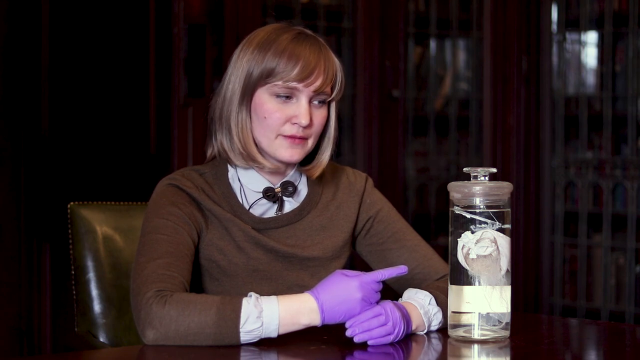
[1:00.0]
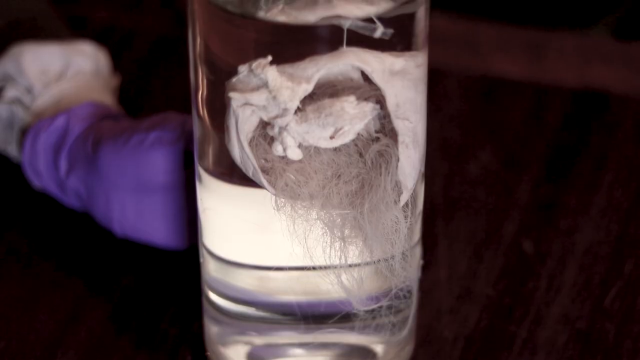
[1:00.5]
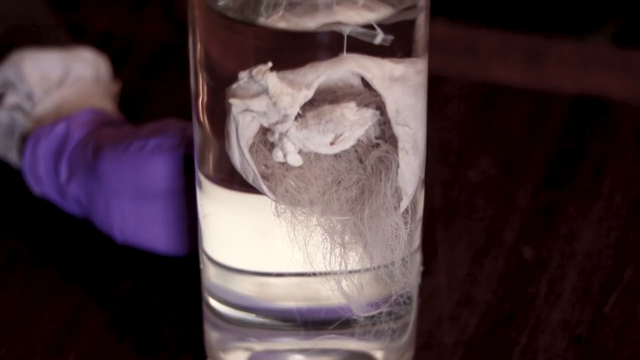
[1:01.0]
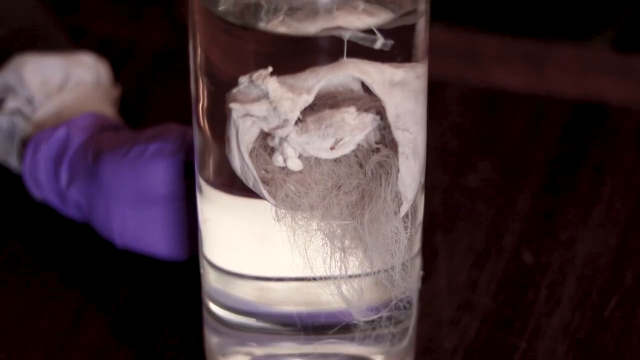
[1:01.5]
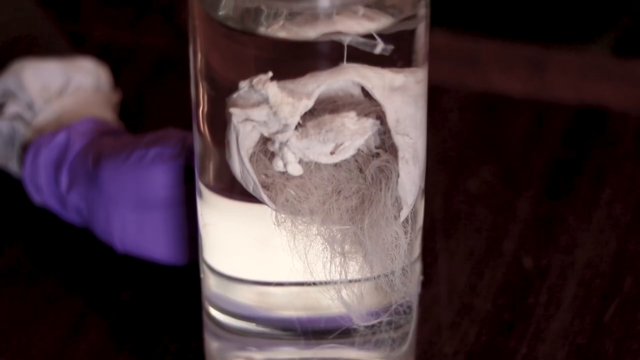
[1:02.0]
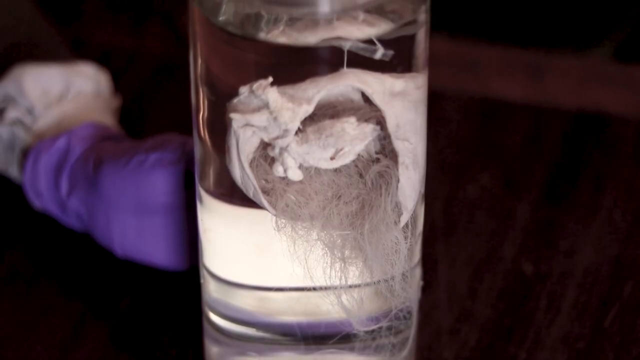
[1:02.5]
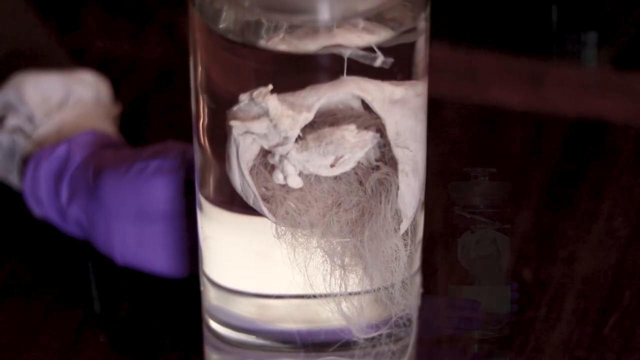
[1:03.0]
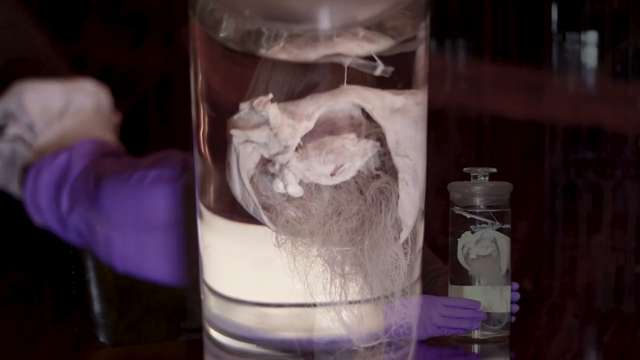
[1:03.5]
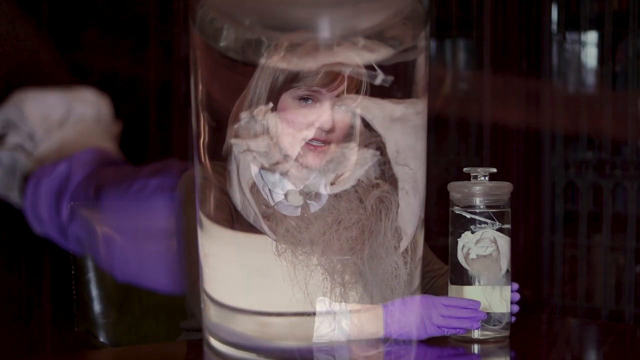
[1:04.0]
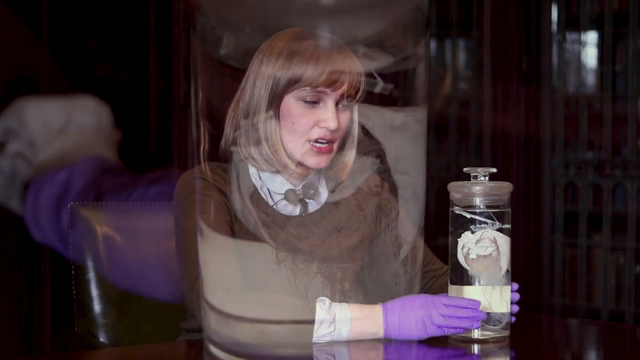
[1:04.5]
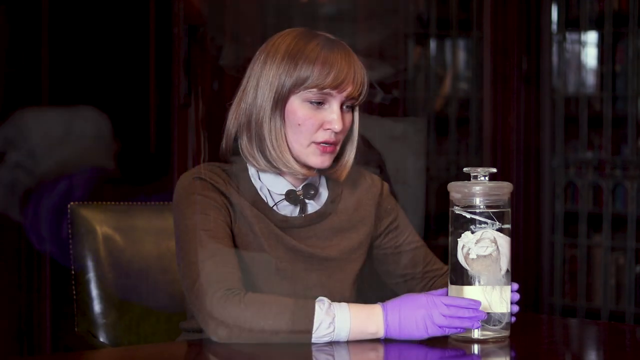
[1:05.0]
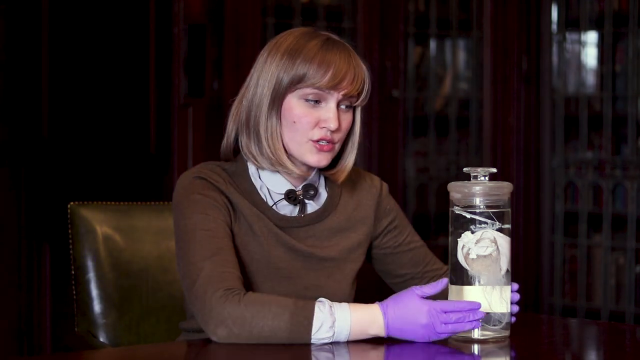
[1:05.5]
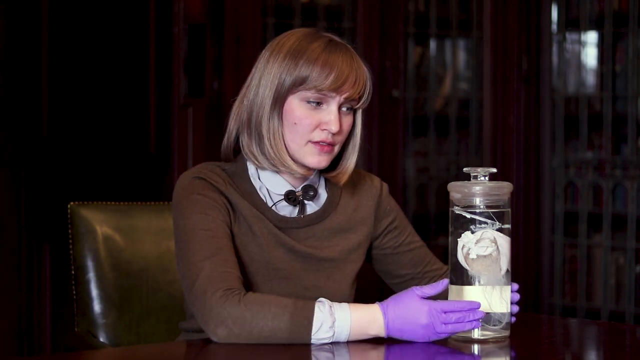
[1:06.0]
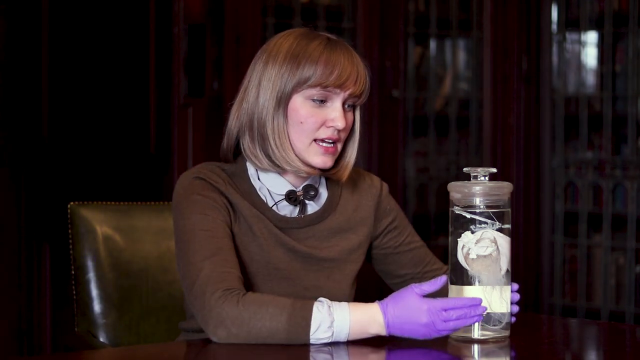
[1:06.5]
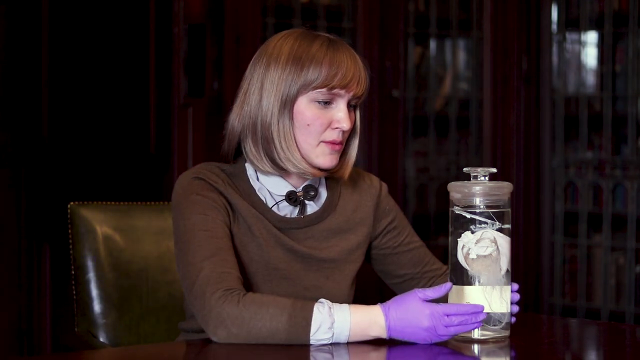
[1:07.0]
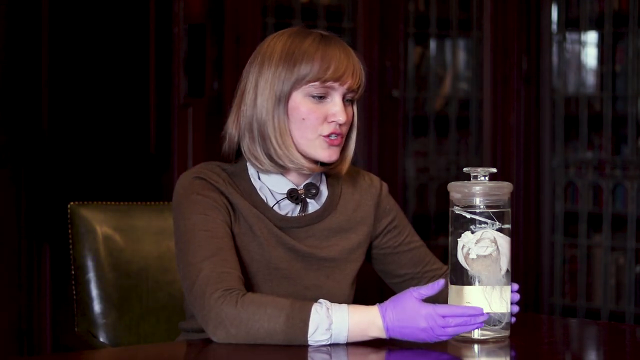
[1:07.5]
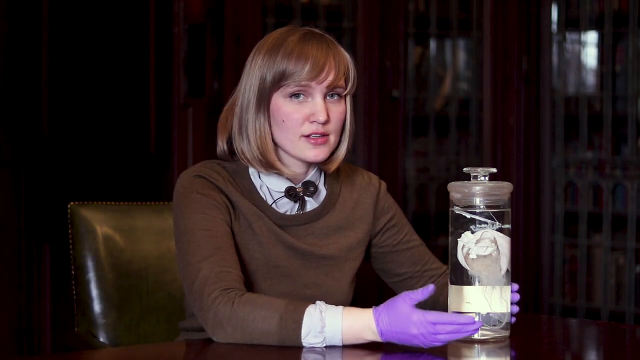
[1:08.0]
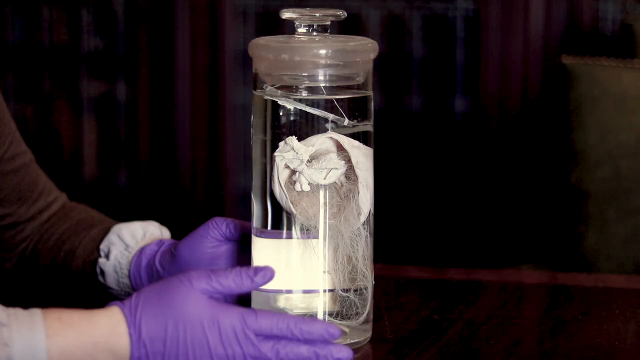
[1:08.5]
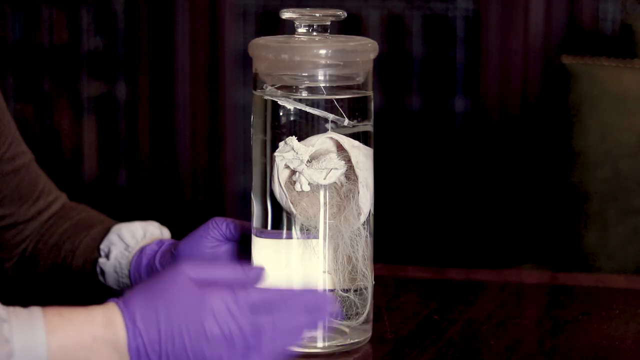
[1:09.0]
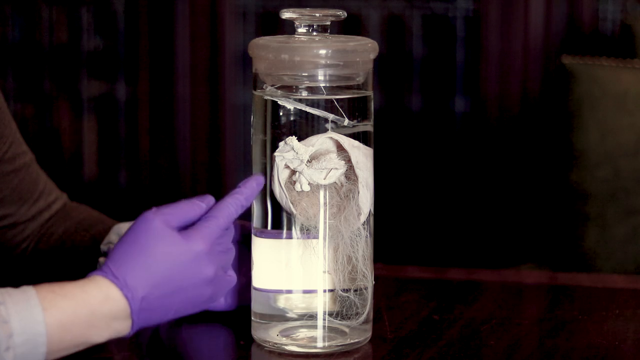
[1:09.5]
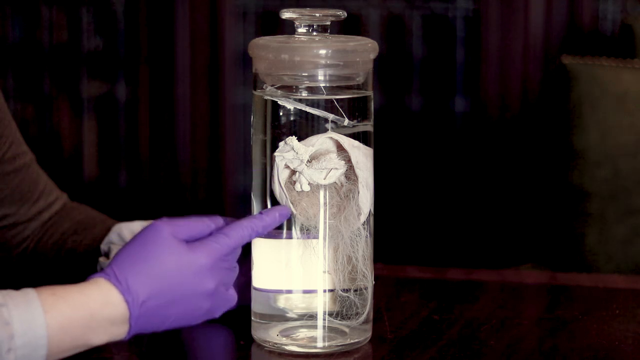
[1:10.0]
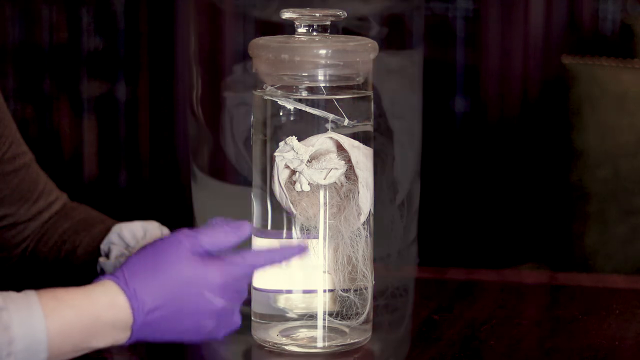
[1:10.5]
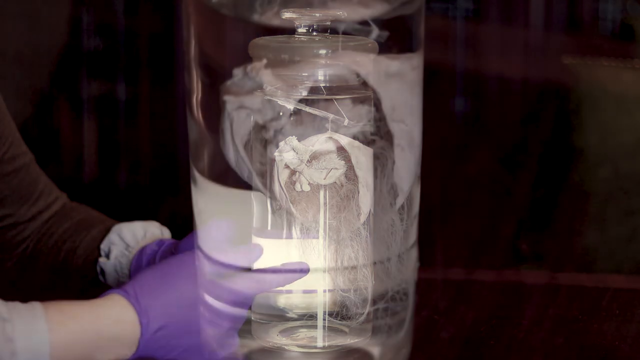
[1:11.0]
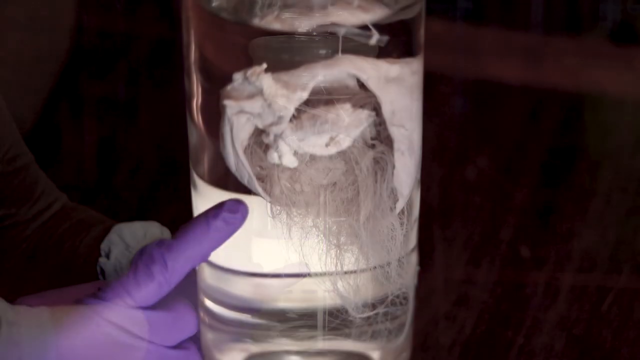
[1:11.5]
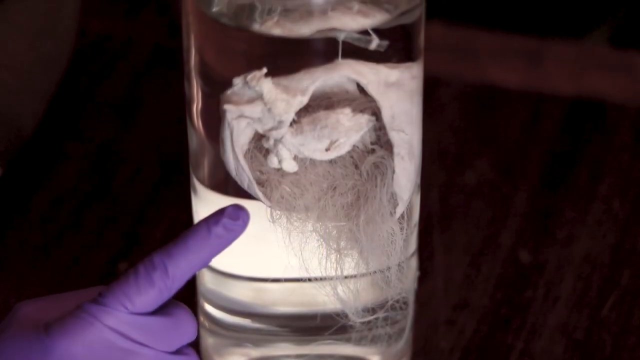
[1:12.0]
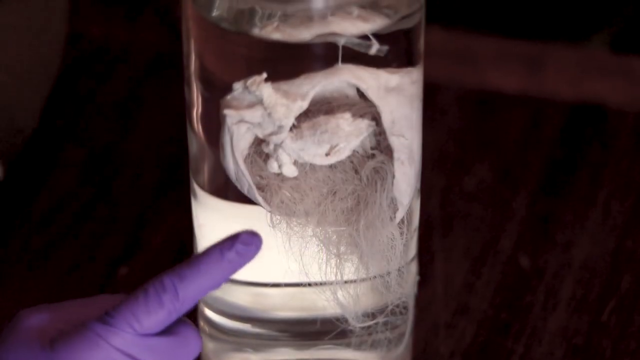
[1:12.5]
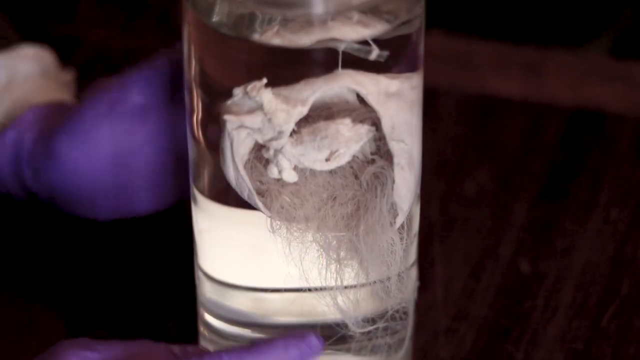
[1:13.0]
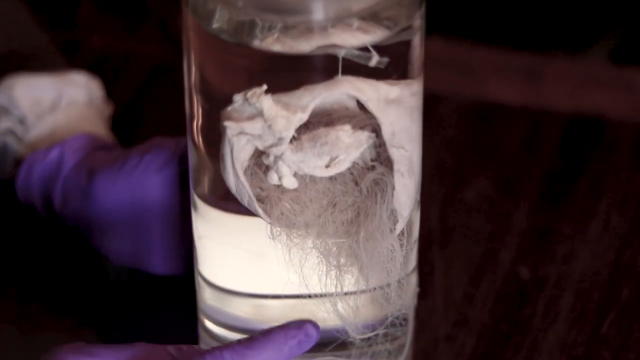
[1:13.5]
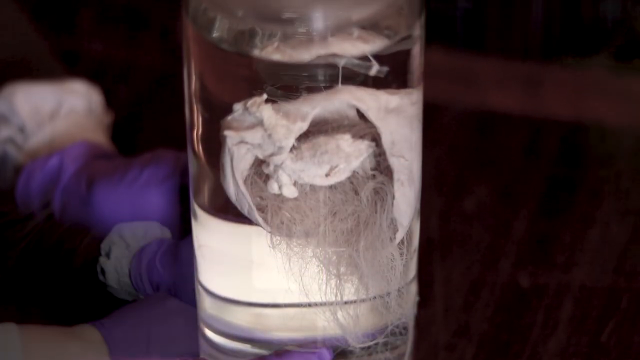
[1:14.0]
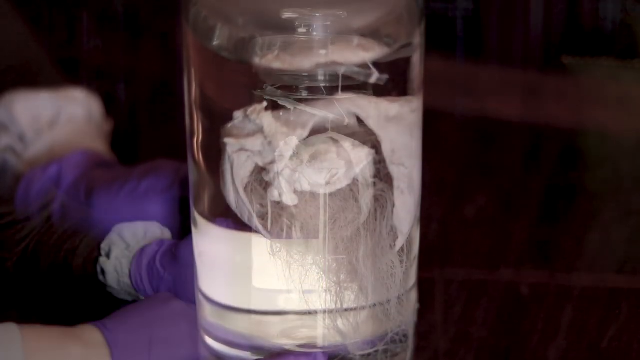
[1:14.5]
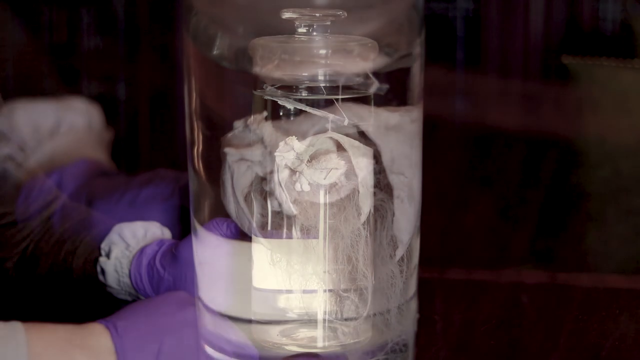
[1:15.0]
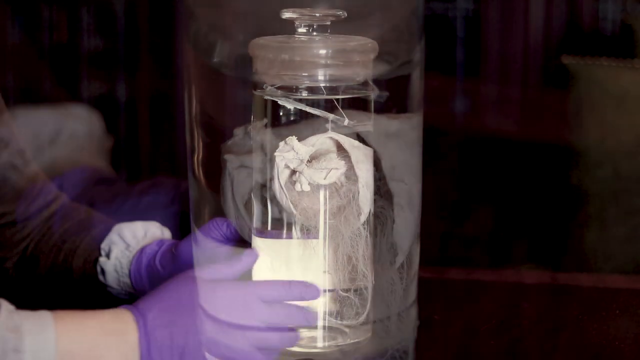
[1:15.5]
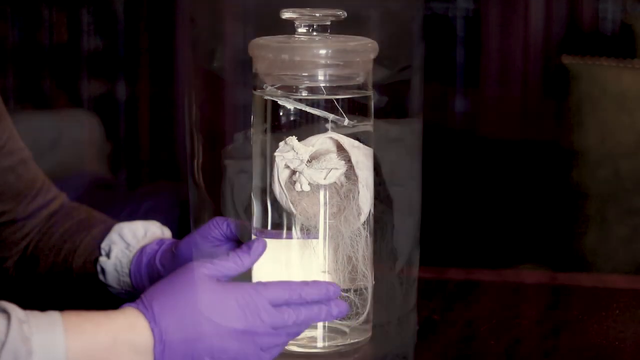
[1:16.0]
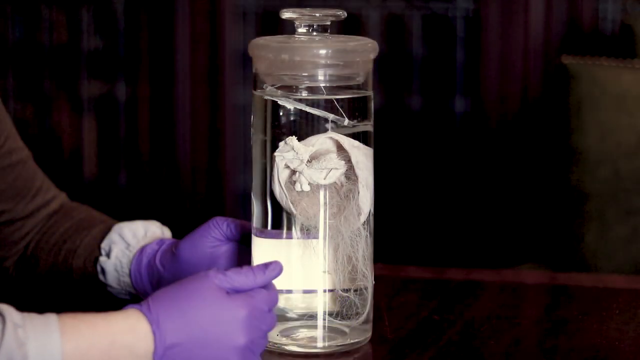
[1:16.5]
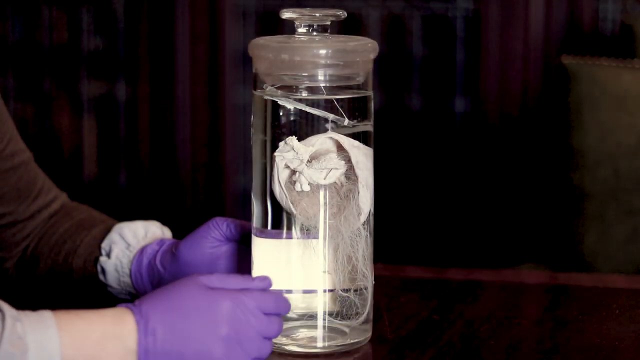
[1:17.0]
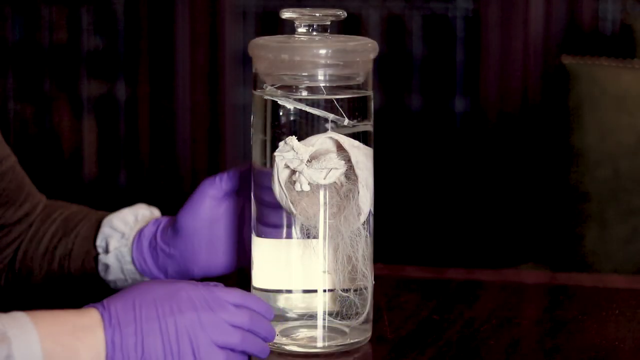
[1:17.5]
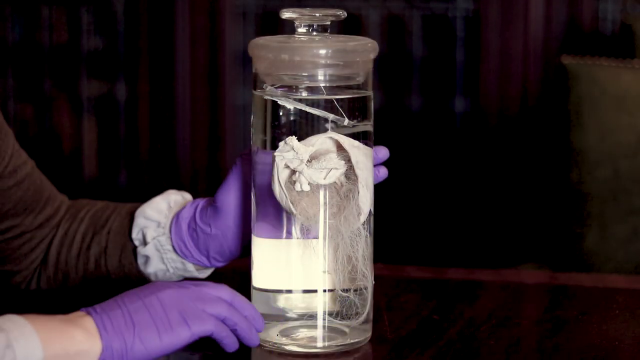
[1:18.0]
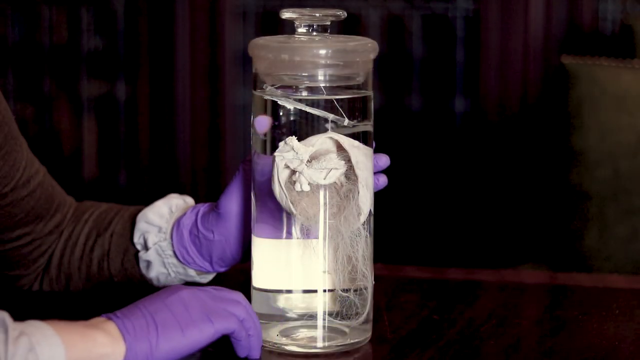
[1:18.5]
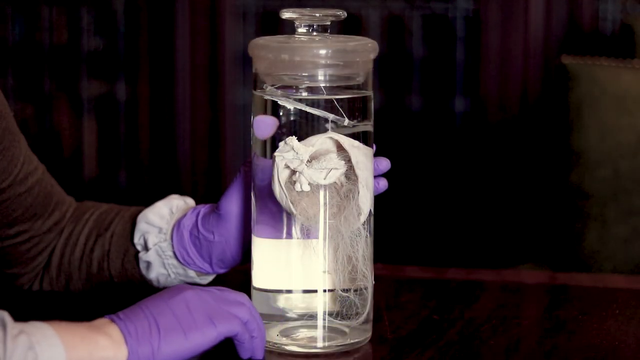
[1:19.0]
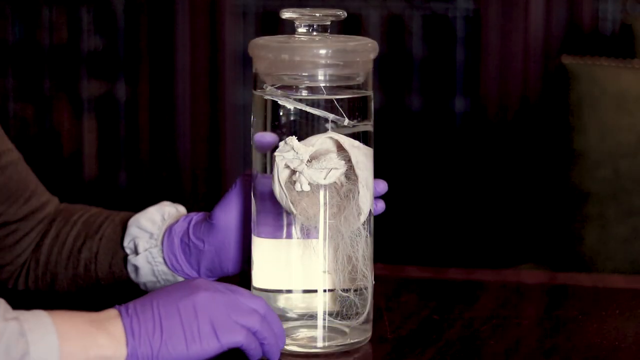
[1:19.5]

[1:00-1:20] The woman with the bobbed hair and sweeping fringe, the brown jumper and the white shirt, is wearing purple disposable gloves. A specimen jar is on the table next to her, and she points towards it with her right hand. A closer look at the jar shows something white and what looks like hair inside it, along with water. She then holds the jar with both hands, and then points again with her right hand while holding it with her left. The view moves up and down the jar. The lid of the jar has a small knob on top, and there appears to be a paper label on the jar. The video cuts back to the woman sitting in the green chair with gold studs around it; she is sitting in what looks like wooden cabinets.